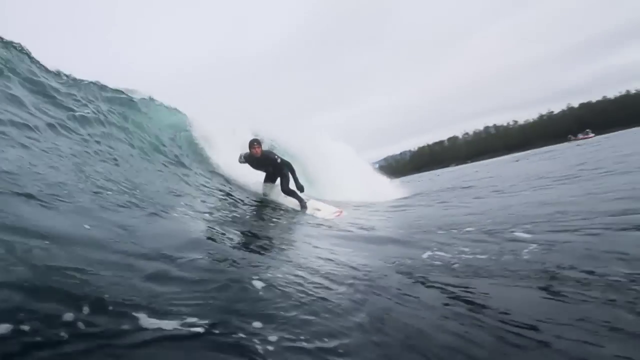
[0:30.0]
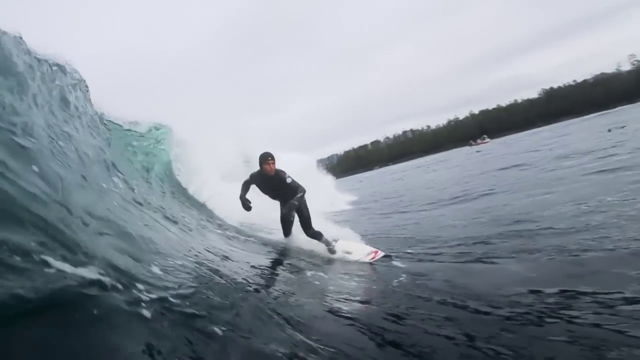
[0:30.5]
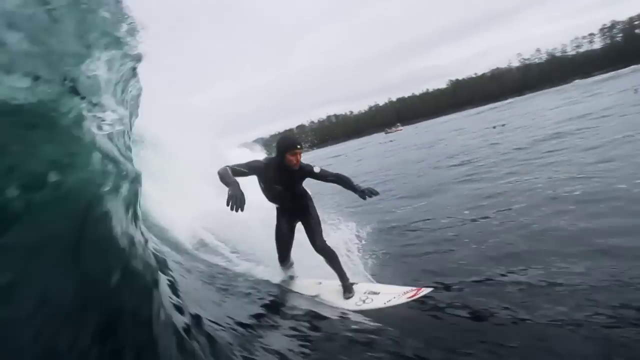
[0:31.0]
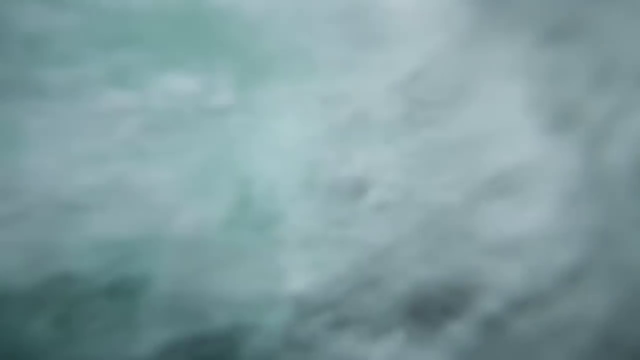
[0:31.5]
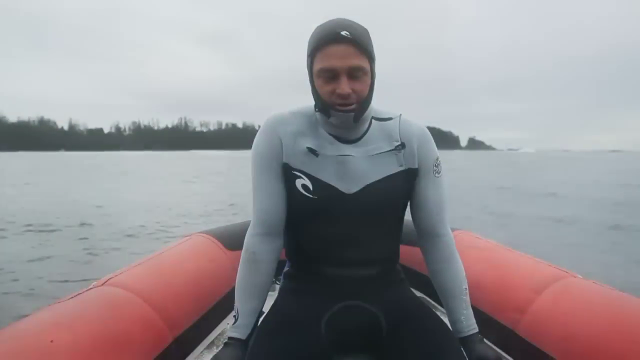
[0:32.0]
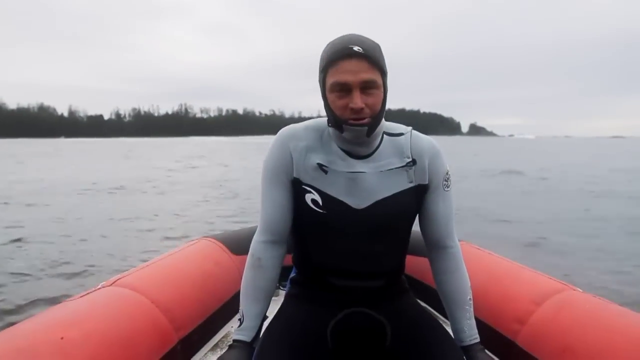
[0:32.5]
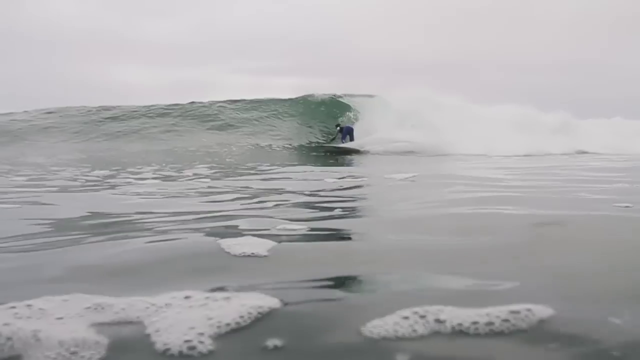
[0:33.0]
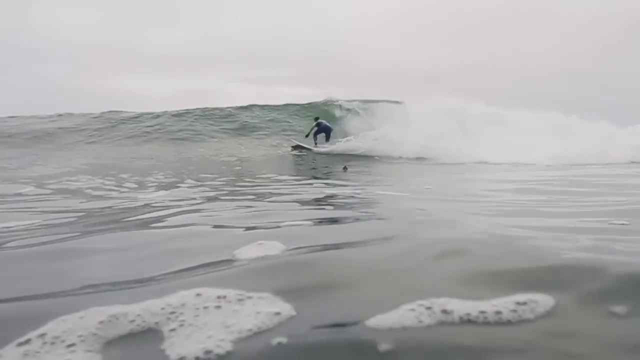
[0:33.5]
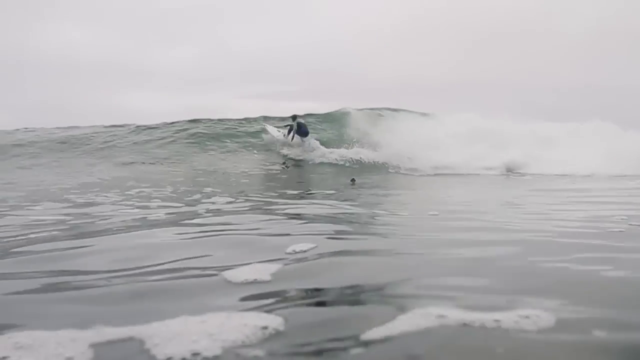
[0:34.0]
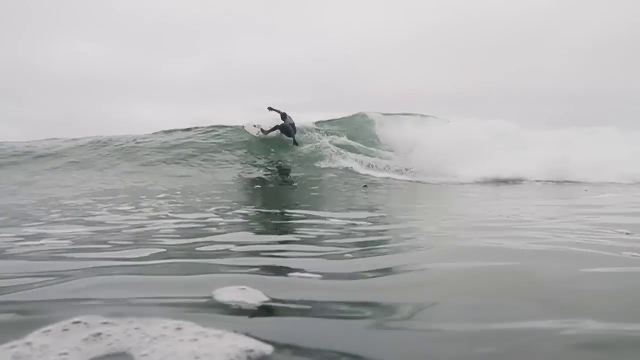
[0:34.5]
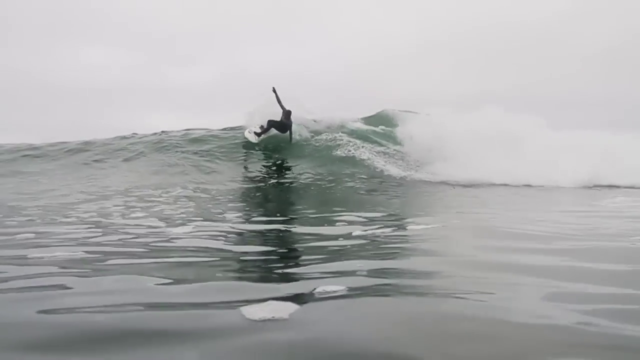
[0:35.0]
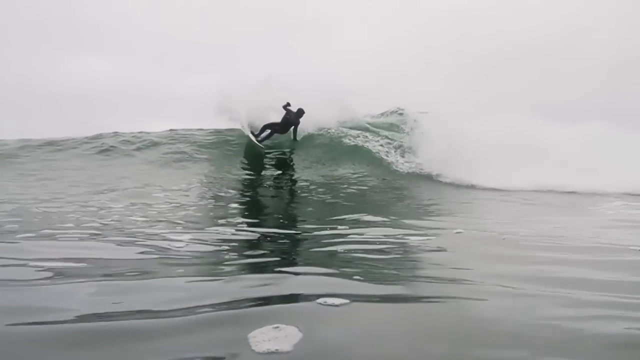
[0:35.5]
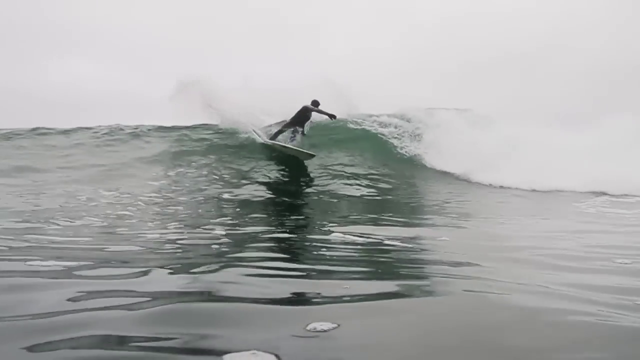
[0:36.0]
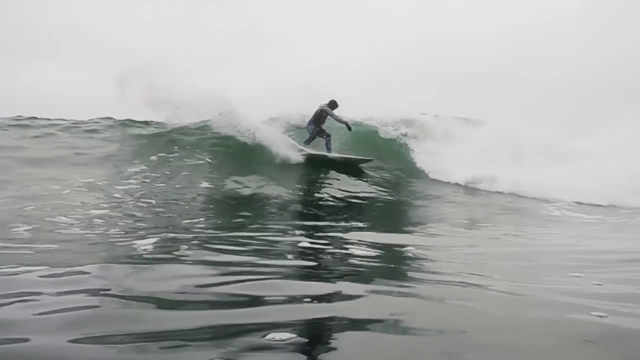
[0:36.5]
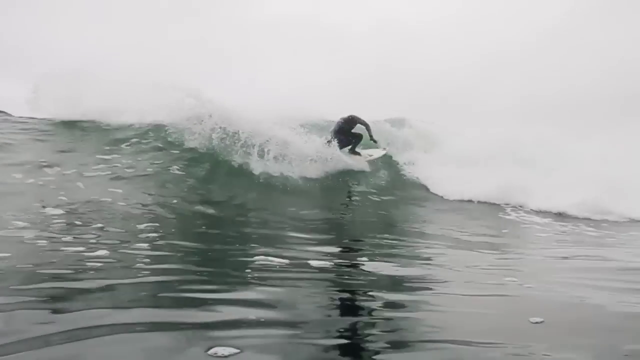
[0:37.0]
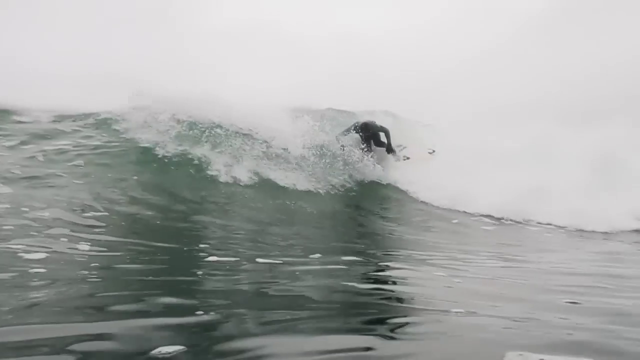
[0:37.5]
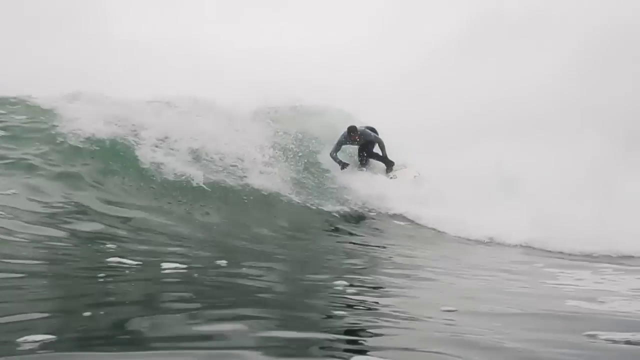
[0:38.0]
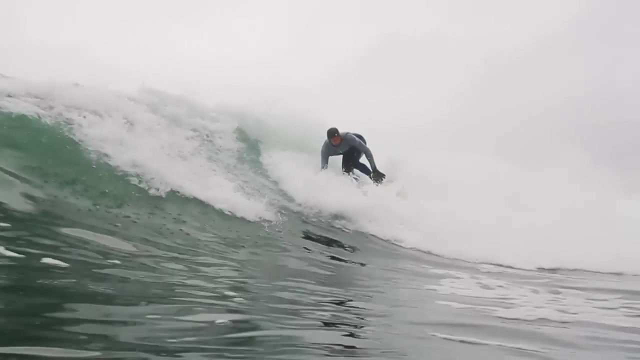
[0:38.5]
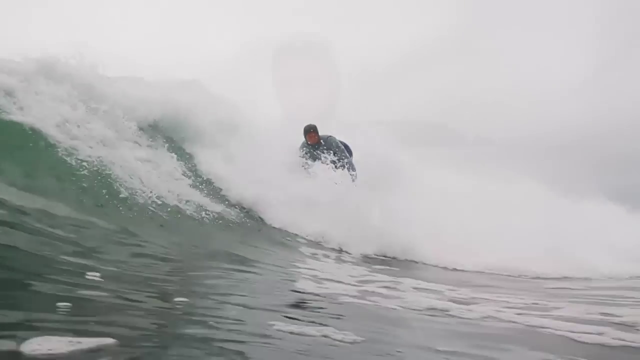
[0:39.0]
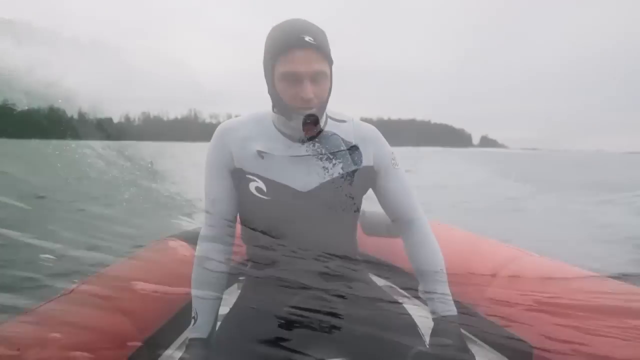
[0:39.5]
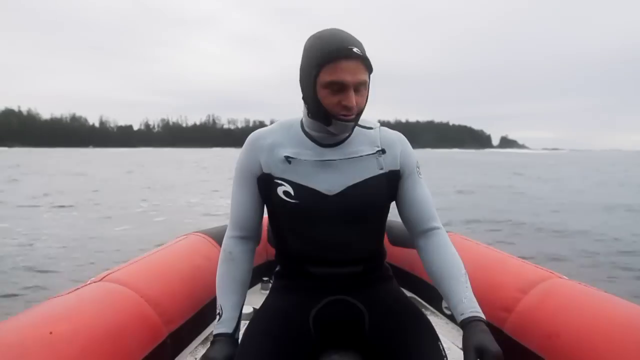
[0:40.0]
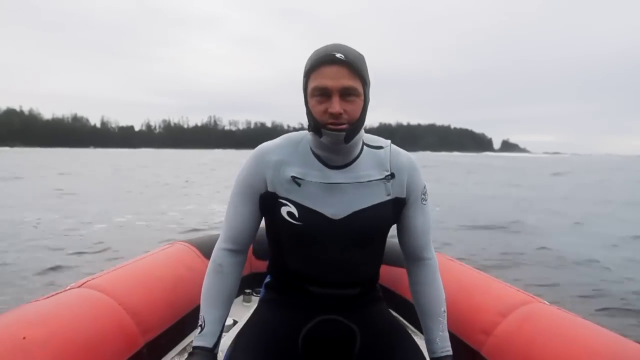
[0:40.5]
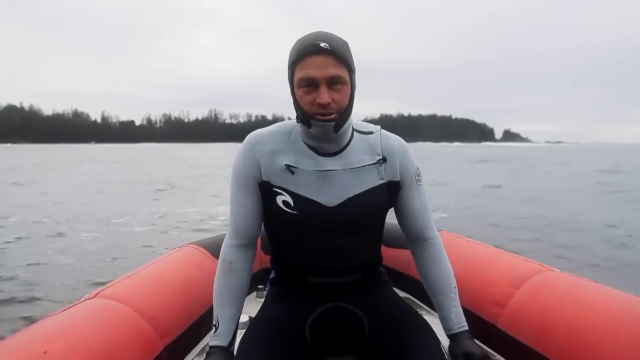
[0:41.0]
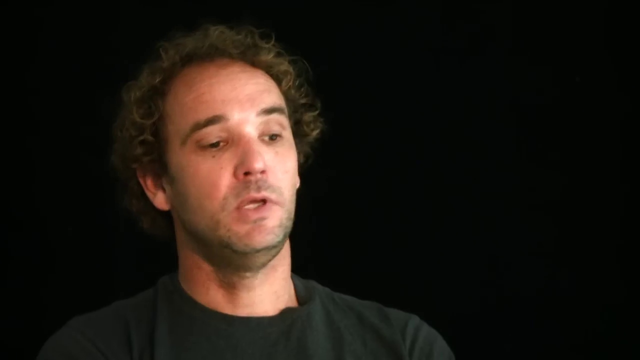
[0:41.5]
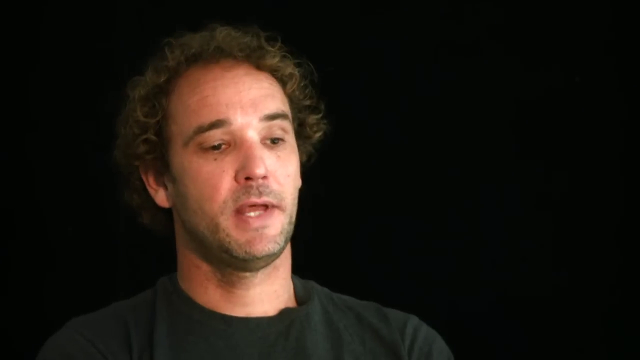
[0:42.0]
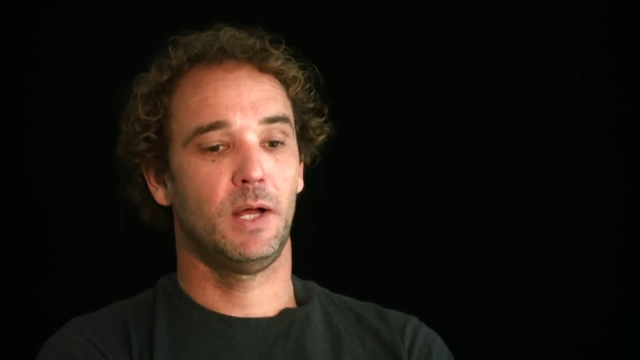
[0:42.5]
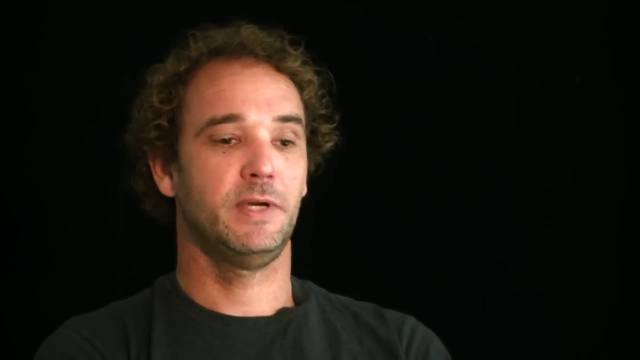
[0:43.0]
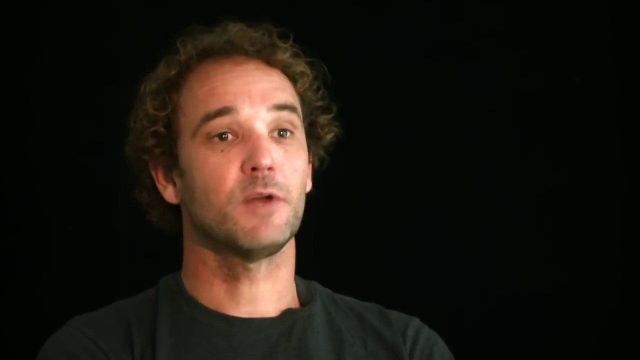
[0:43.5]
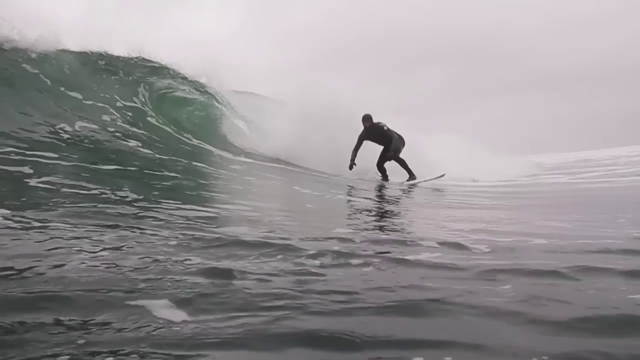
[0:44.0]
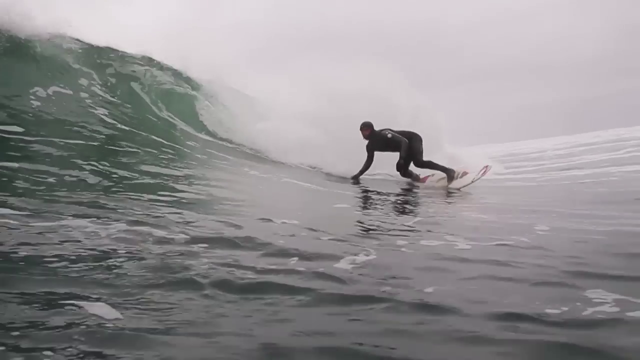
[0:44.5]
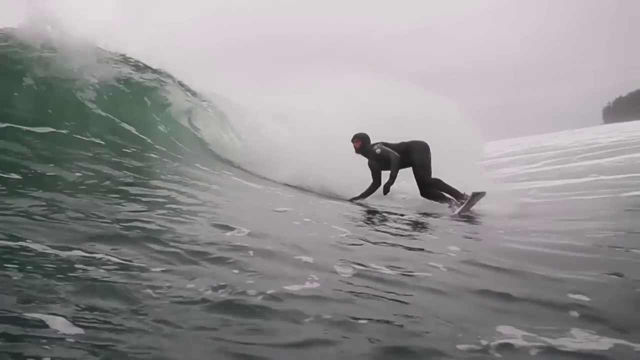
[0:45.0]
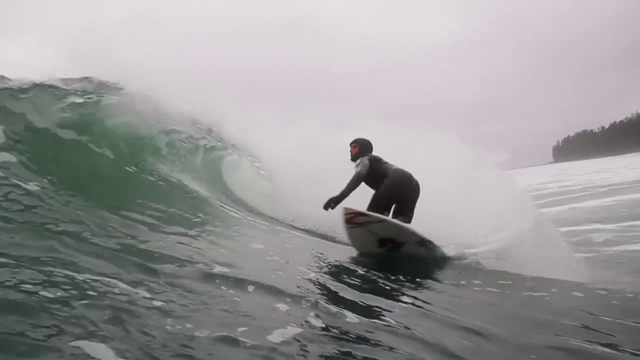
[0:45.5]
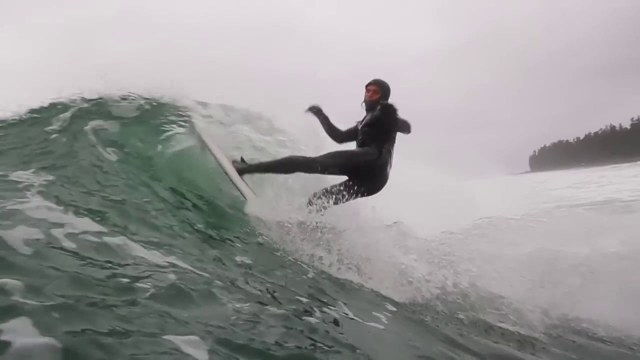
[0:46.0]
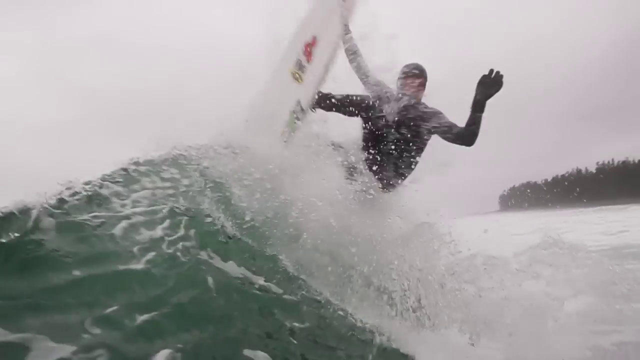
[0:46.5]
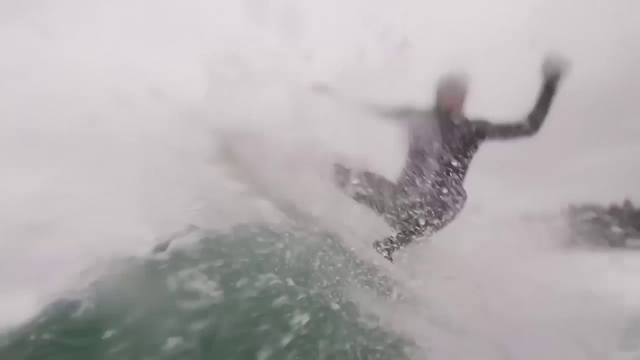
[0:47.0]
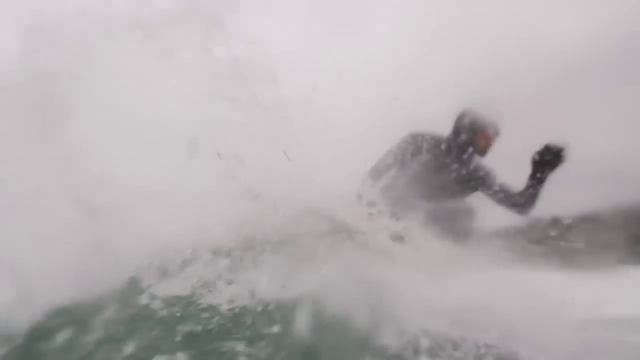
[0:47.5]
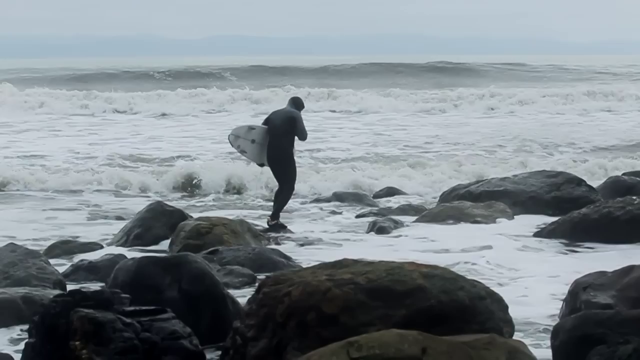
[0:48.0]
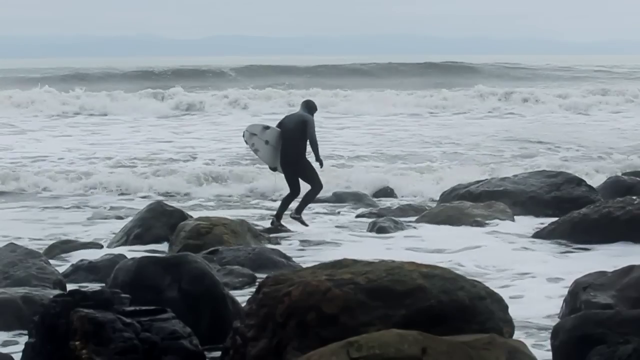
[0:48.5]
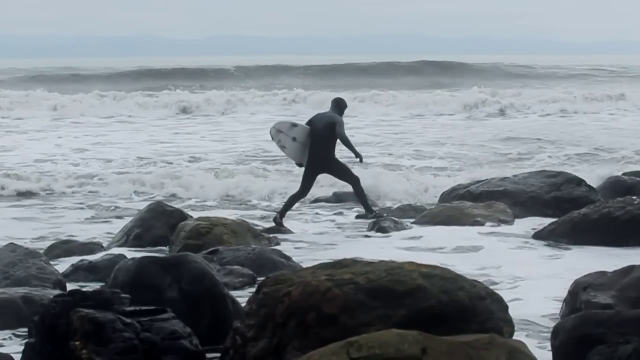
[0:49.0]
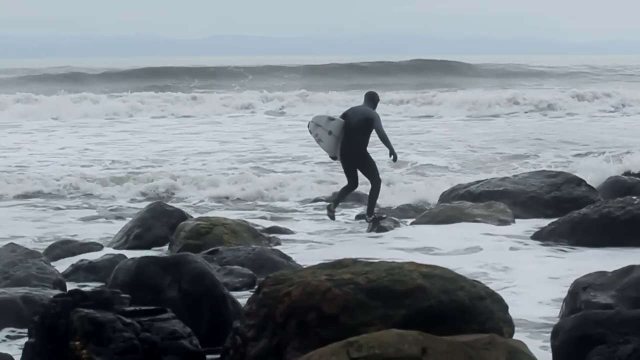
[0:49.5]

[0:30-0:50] The man in the wetsuit rides in the wave as it comes down over him. The man then sits in a boat wearing the gray wetsuit, with his face barely visible, floating in the water. Back on the wave, the surfer is on the very tip top of it, with only water visible, and he comes back down, riding the wave out on the surfboard. The man rides in the boat again. Then the black screen returns with the white man with curly brown hair, a black shirt and a scruffy-looking face, talking. Next the man in the gray and black wetsuit rides the surfboard on a wave that looks like it is about to crash down on him; the sky is barely visible, as the frame is mainly water and the surfer. He goes back up against the wave and gets on top of it. Then he walks across the rocks.